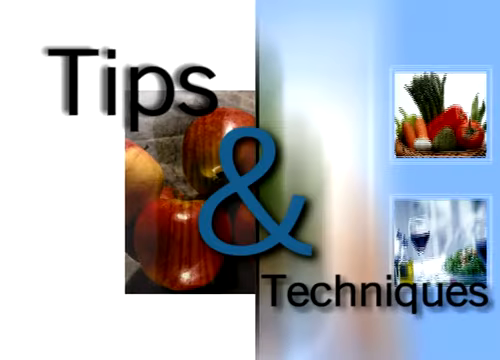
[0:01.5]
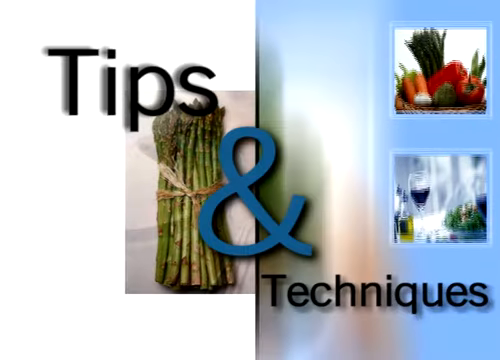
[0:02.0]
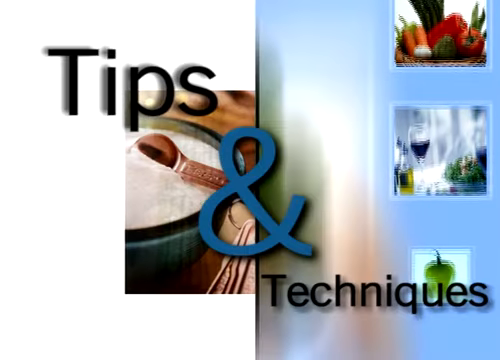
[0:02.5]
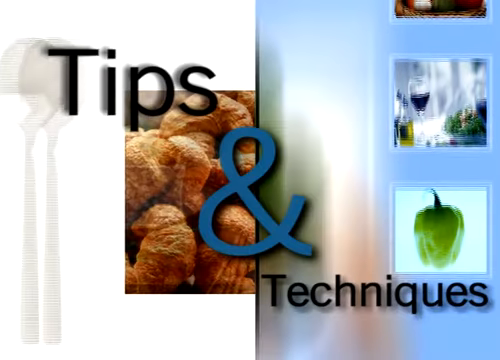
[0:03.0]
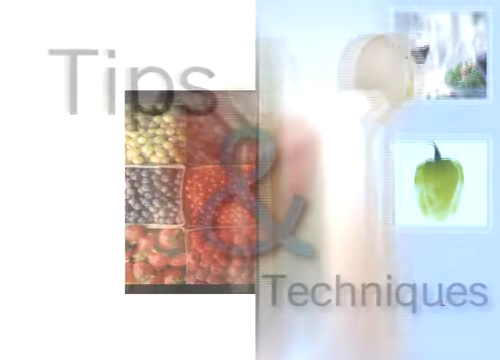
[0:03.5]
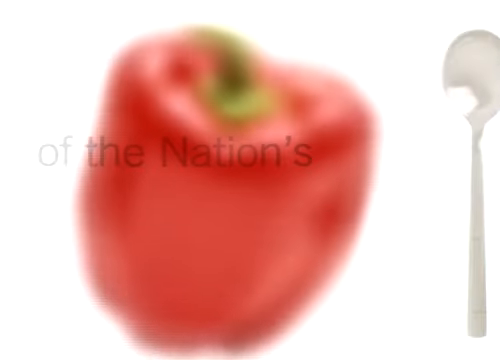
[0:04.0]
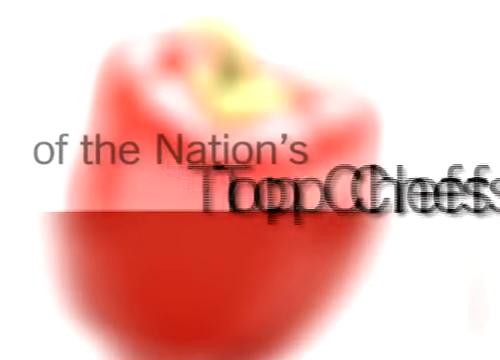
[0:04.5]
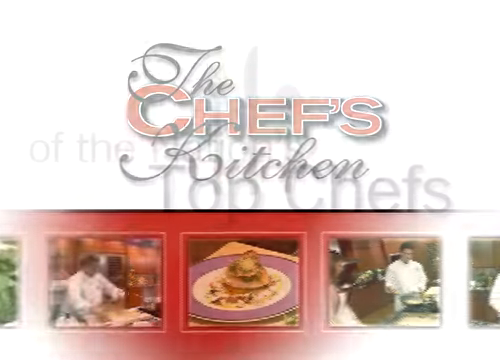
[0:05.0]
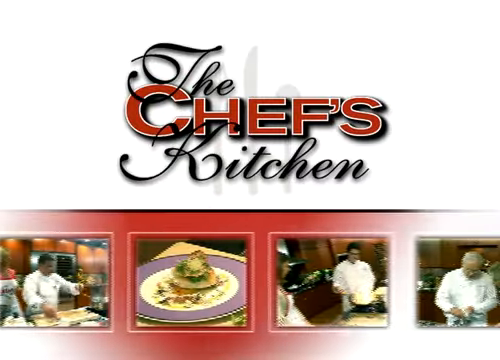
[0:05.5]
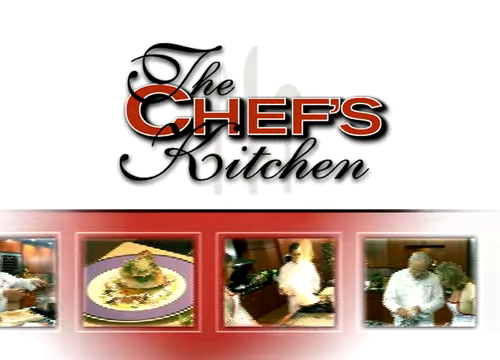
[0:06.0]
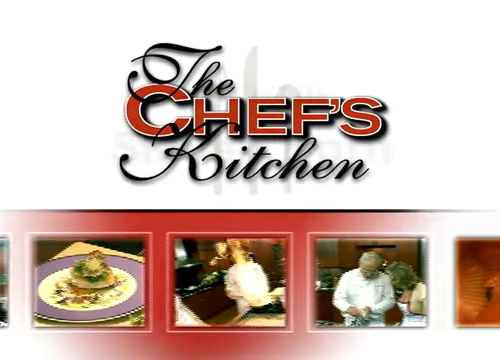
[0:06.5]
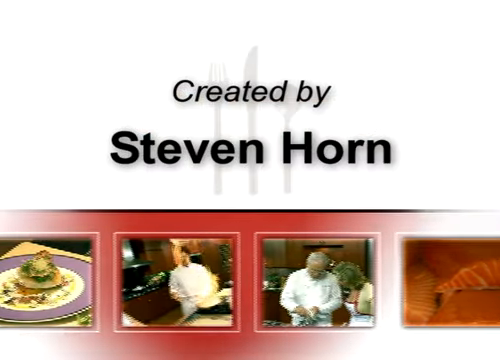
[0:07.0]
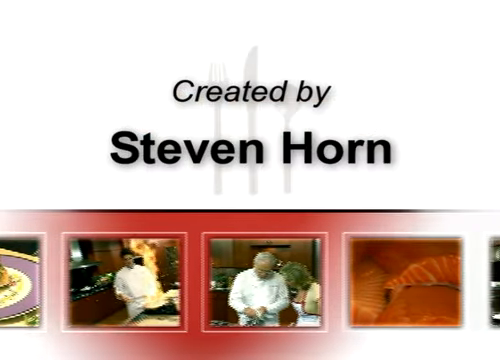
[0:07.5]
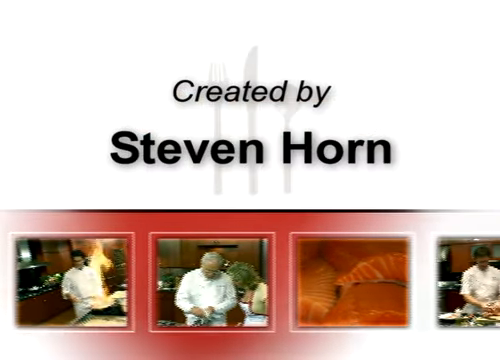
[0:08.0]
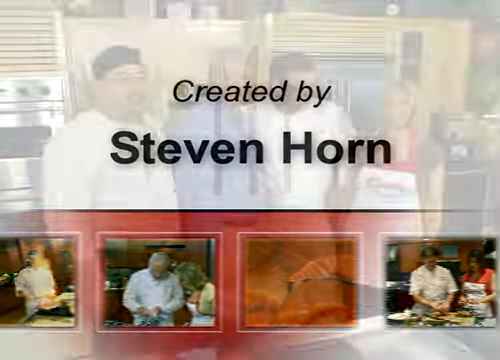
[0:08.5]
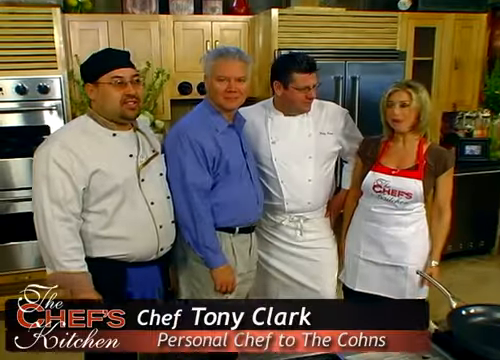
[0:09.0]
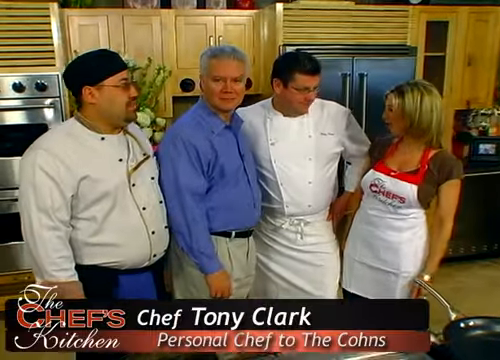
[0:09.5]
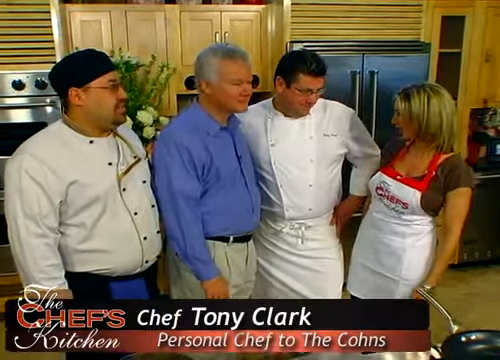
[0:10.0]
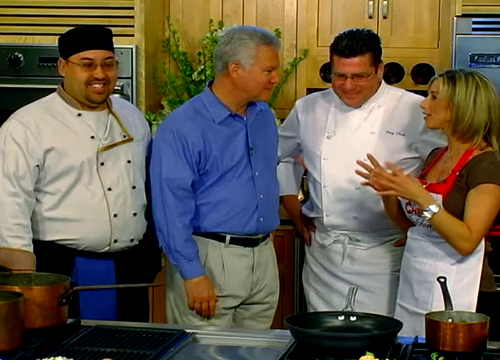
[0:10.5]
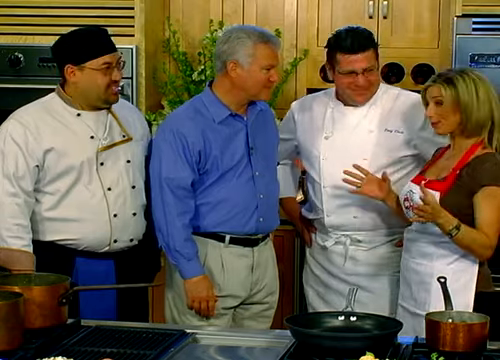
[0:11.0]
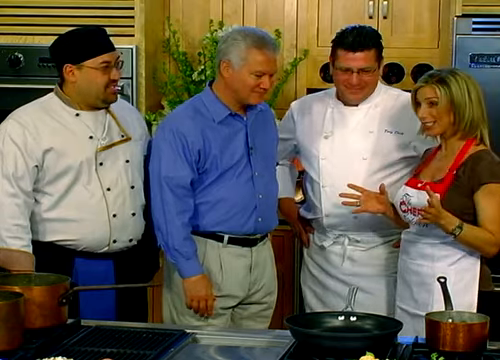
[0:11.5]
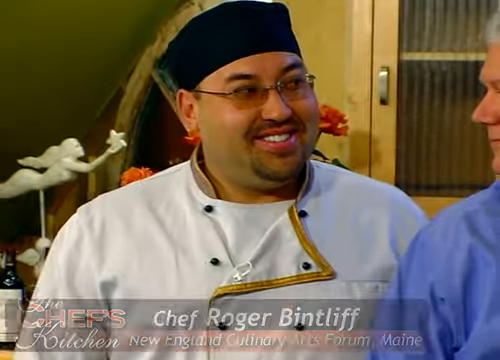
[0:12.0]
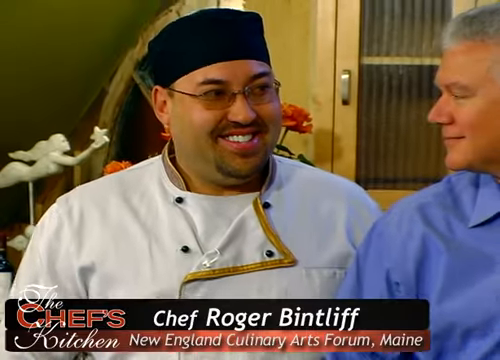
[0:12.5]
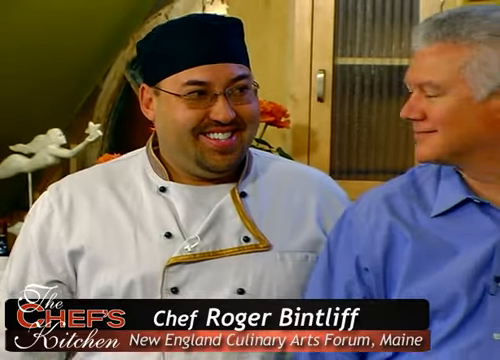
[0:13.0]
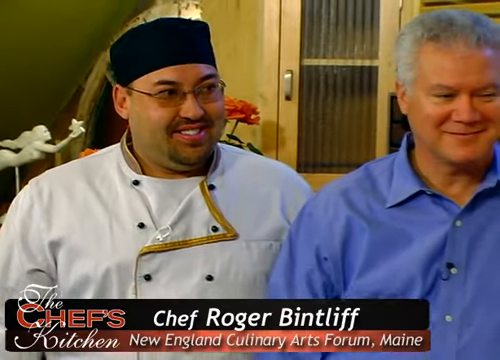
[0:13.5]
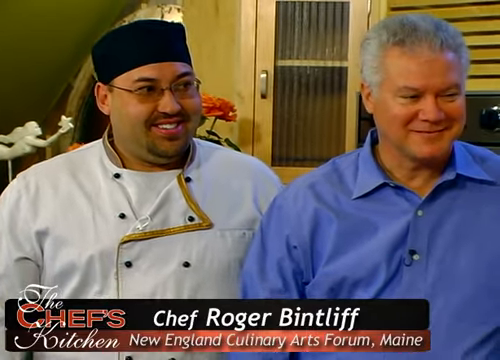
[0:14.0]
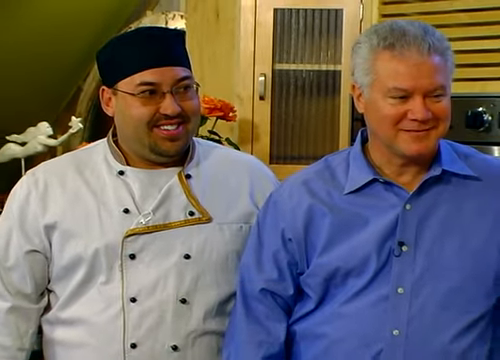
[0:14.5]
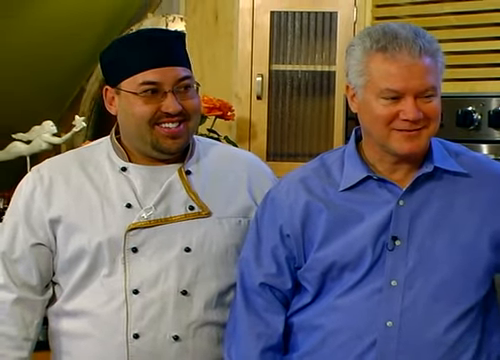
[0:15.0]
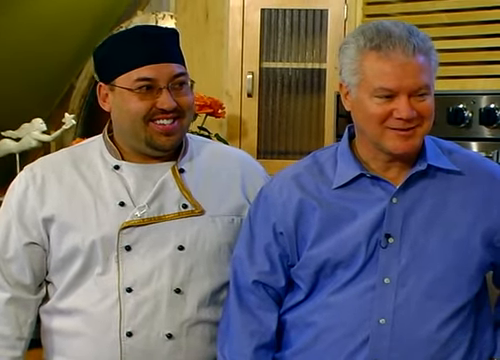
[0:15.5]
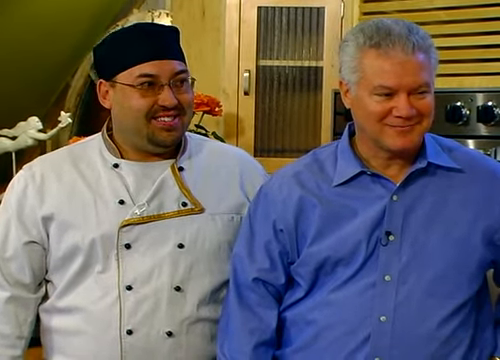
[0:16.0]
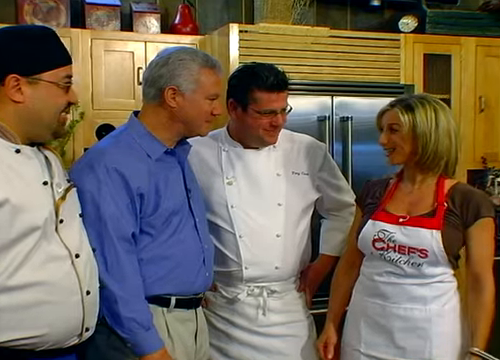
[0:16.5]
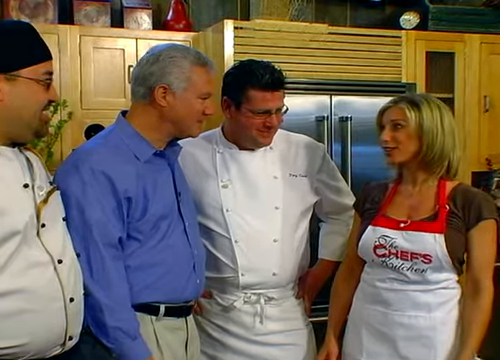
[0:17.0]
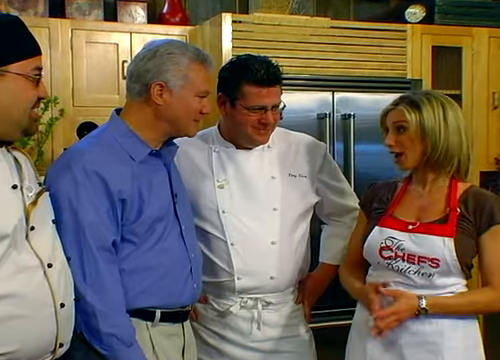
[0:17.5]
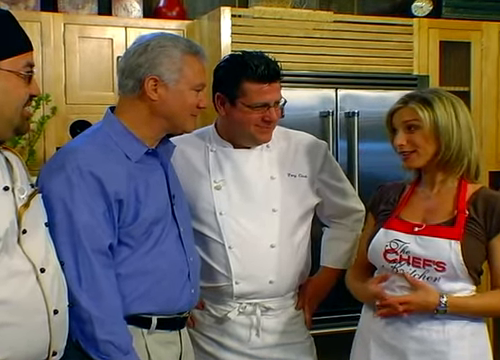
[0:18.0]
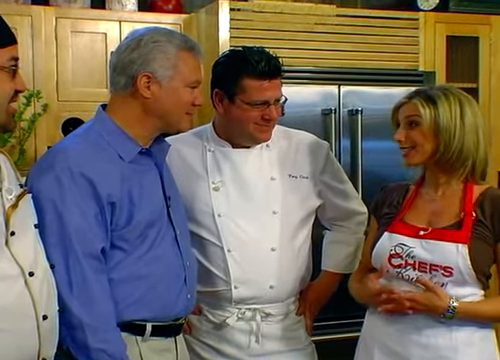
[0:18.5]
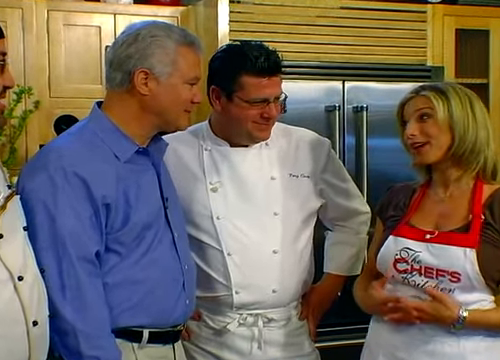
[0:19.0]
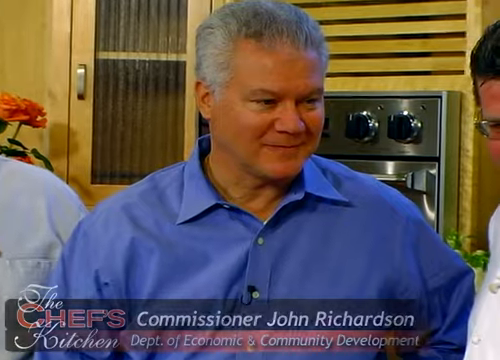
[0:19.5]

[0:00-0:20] In a kitchen, scrolling text comes across the bottom of the screen. There are lots of chefs: a woman chef, a man chef, and three men chefs. Text reads "Chef Roger Betlove New England culinary arts." Another man in a blue shirt appears, possibly a chef, and then a chef and a student. A name that seems to be Commissioner Josh Richardson appears. Asparagus is shown, more scrolling text appears, and a guy holds a pan that catches on fire. Text including "personal chef" is shown. The men talk a little; one chef wears a black hat, and the other chef is smiling and wears a chef coat. "The chef's kitchen" is written across the woman's chest. She wears a white apron-type thing with a red neckband of some kind and has blonde hair. In the background there is a refrigerator of some kind. She talks to the other chefs.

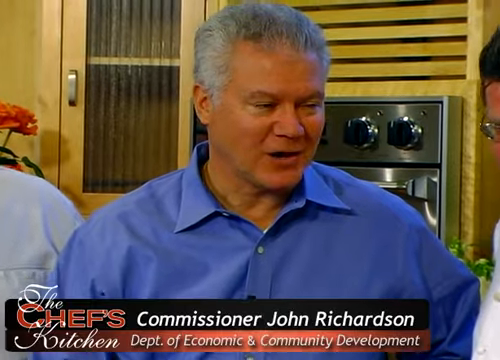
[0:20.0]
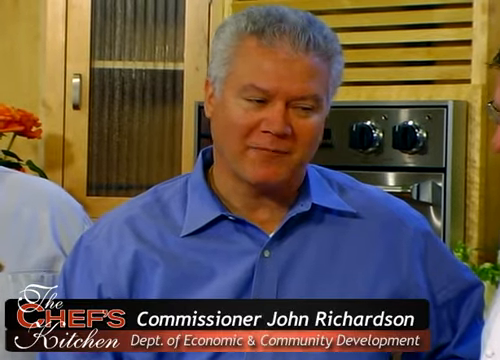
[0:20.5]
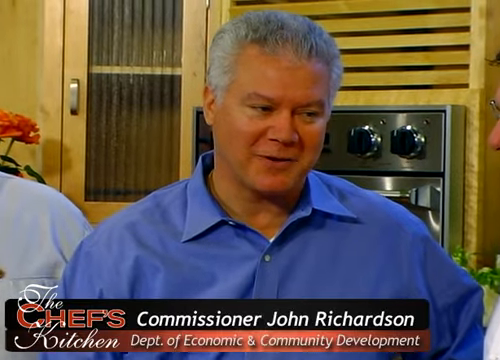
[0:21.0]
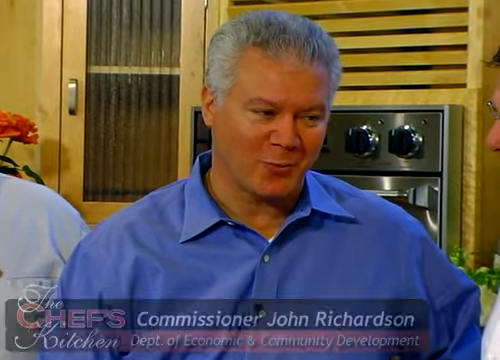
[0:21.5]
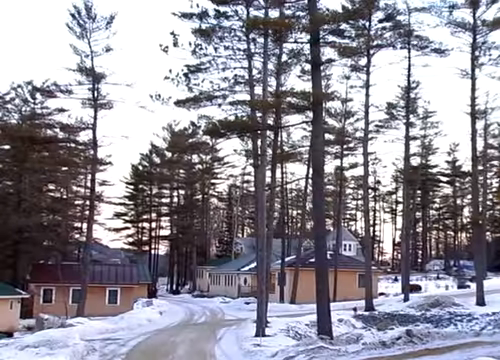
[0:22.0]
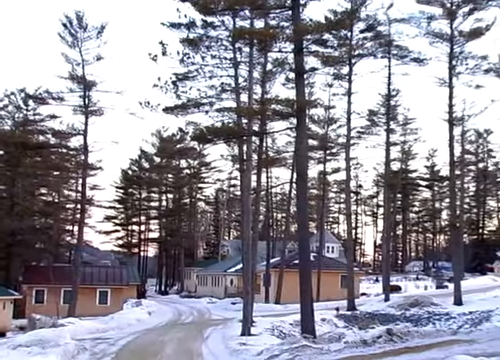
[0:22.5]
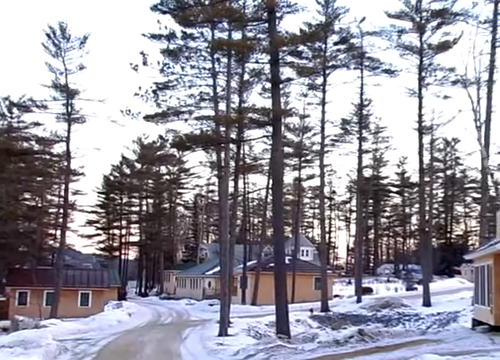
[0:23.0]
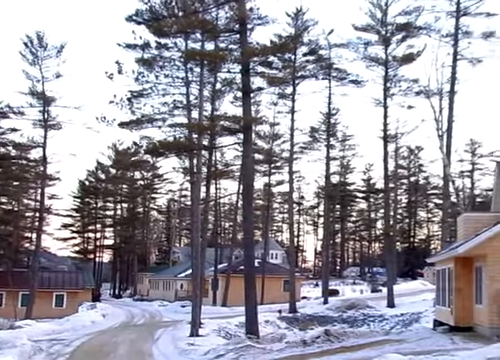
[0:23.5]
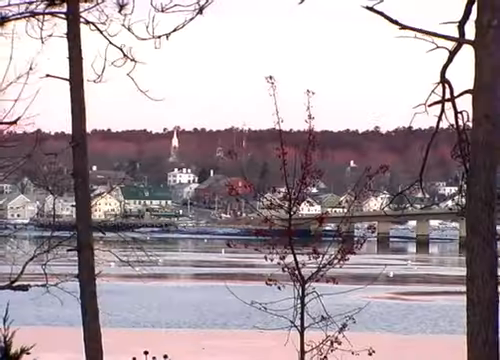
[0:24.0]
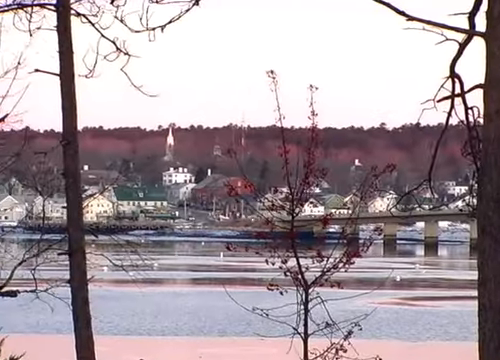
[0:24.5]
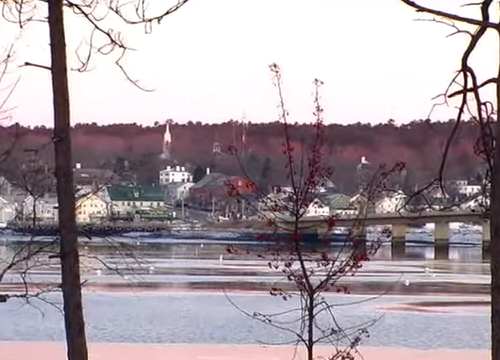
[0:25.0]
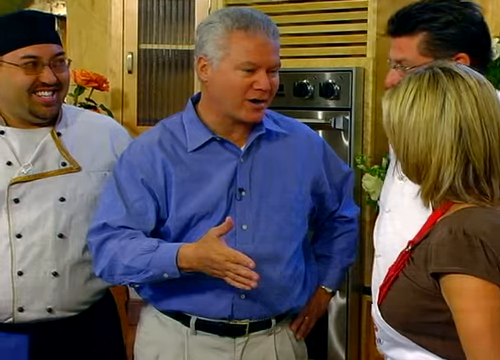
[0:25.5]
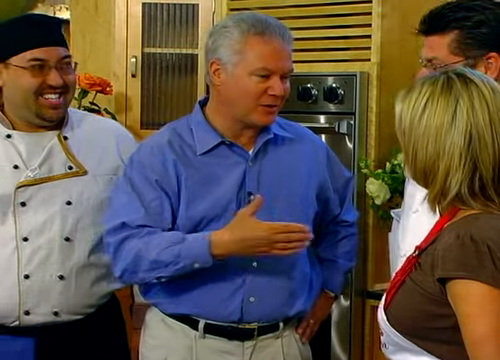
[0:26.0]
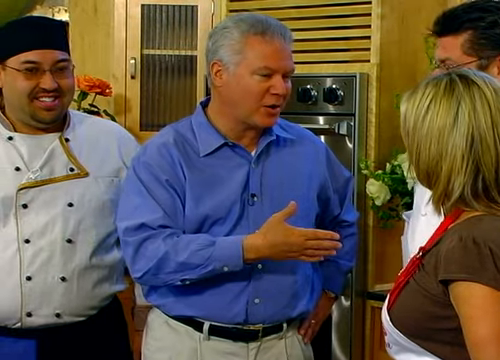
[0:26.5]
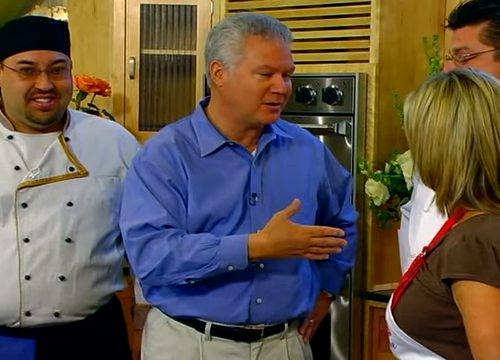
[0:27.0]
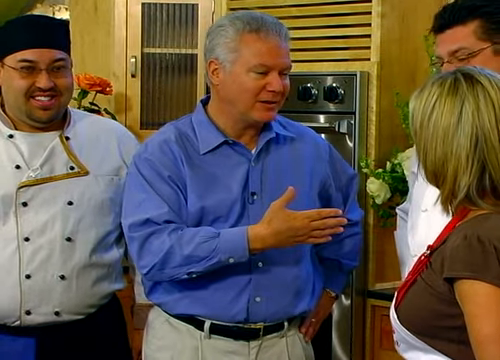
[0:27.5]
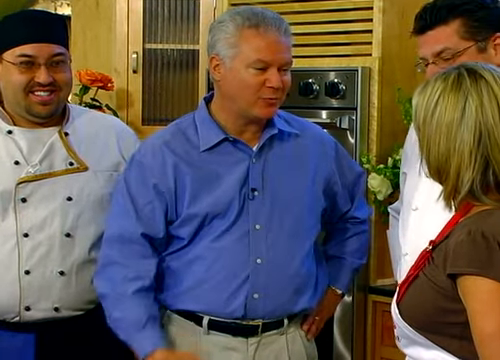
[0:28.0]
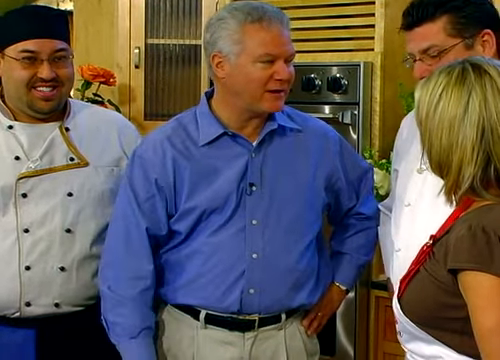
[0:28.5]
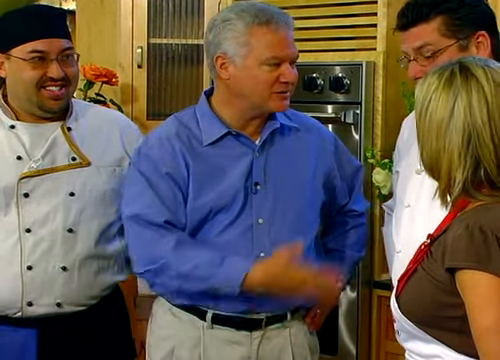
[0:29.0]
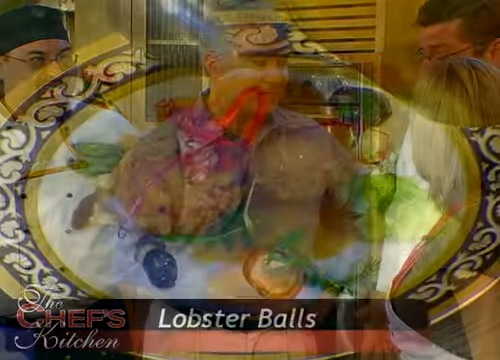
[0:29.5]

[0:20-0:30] A Black man wearing glasses points at another chef. They seem to be putting stuff on a plate a little, though it is unclear whether they are making something, getting ready to prepare something, or just having a conversation. Pine trees and snow are shown in a little town. He has a belt on. Chef John Richardson is talking; he has grayer-type hair. Windows in the houses are visible. The woman has an apron on, and there is some food on a plate.